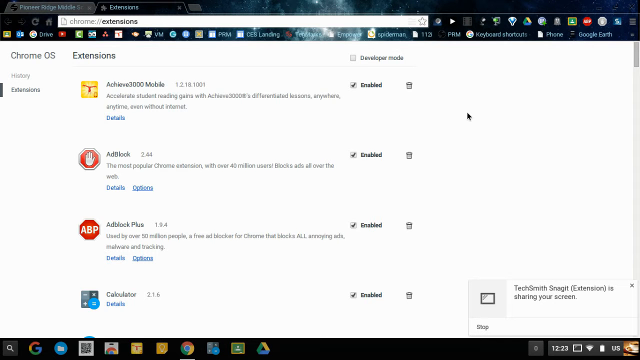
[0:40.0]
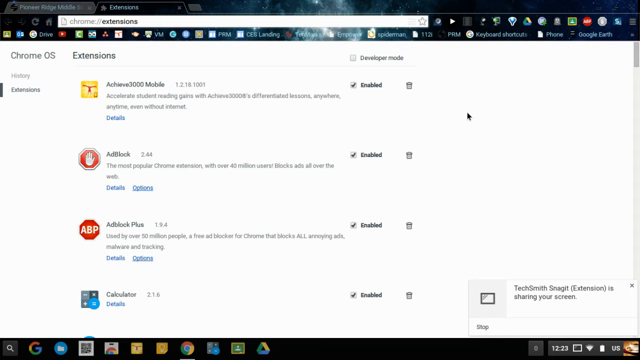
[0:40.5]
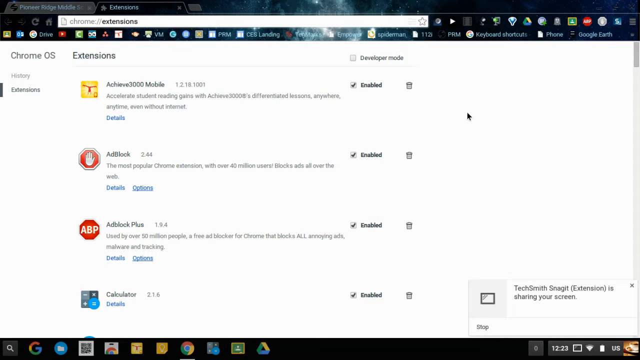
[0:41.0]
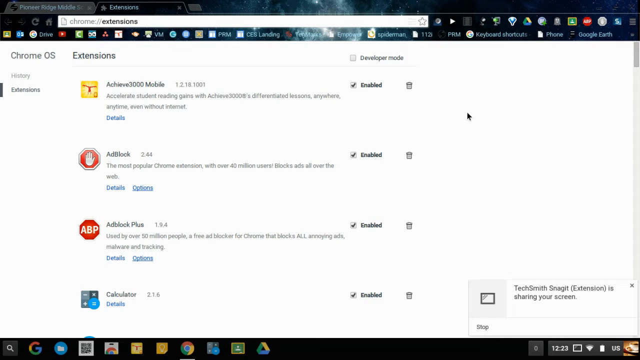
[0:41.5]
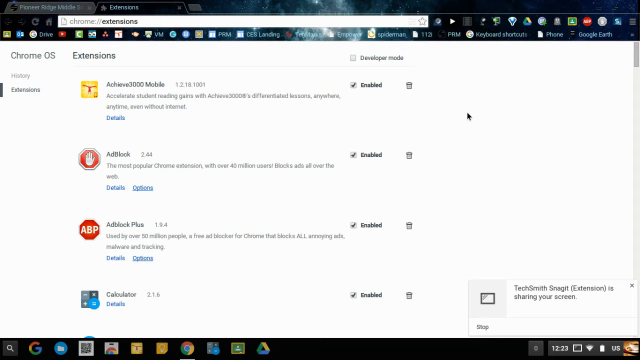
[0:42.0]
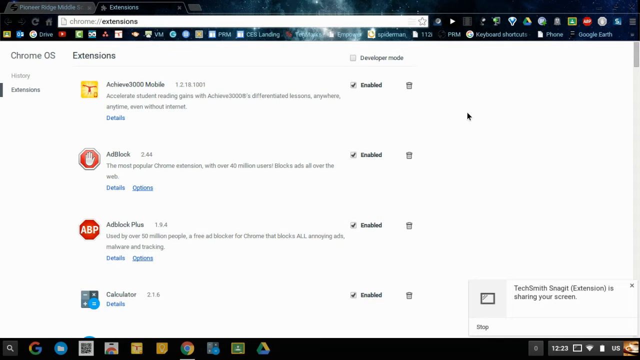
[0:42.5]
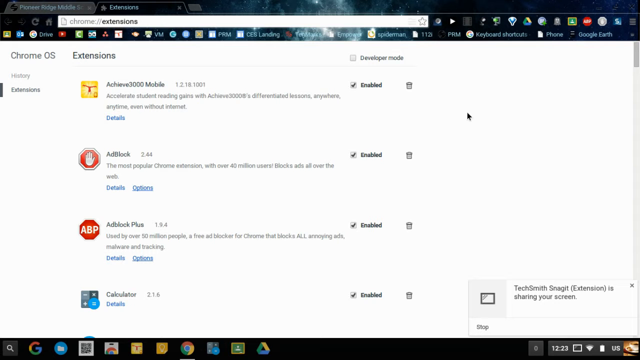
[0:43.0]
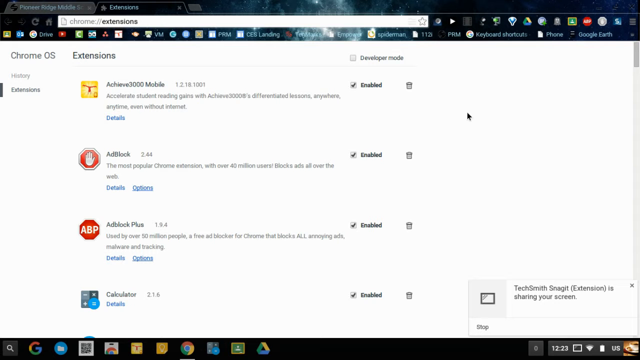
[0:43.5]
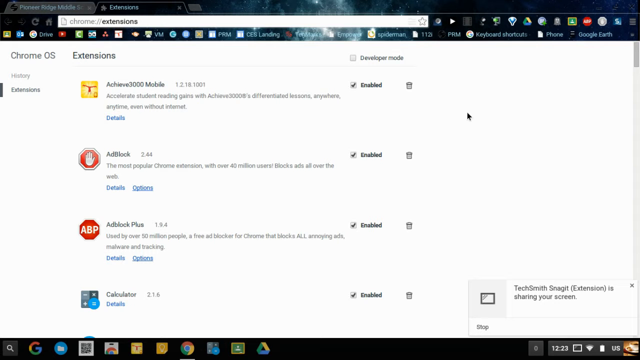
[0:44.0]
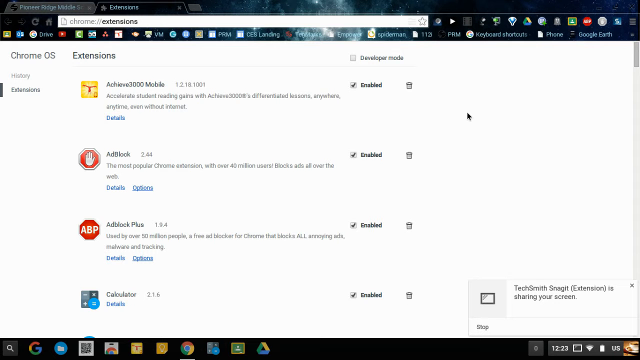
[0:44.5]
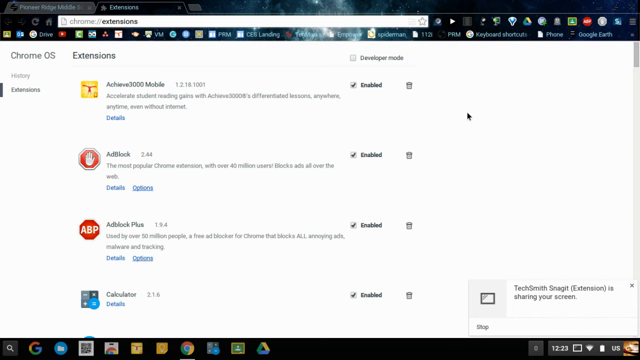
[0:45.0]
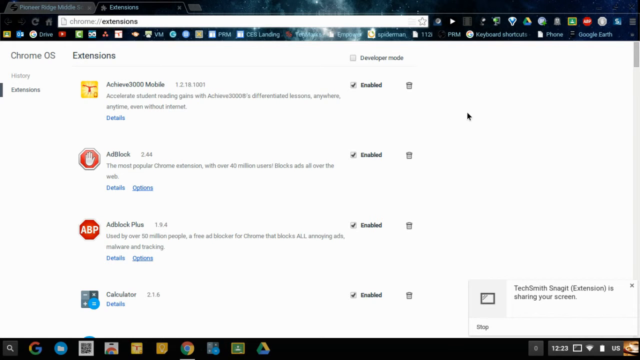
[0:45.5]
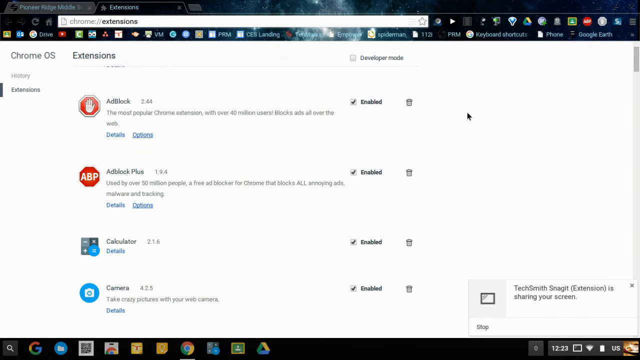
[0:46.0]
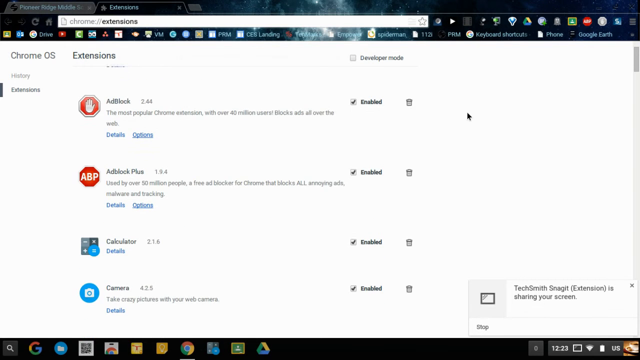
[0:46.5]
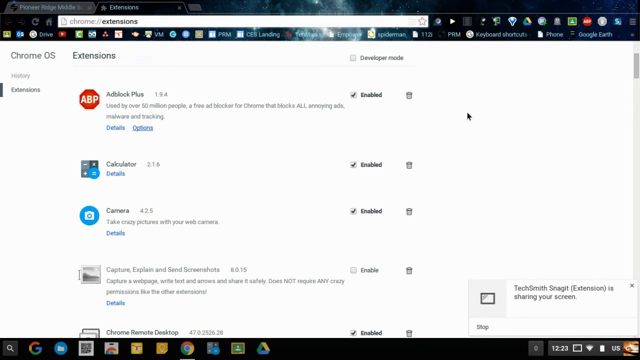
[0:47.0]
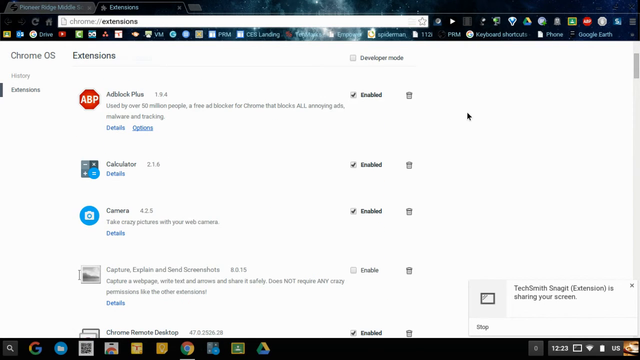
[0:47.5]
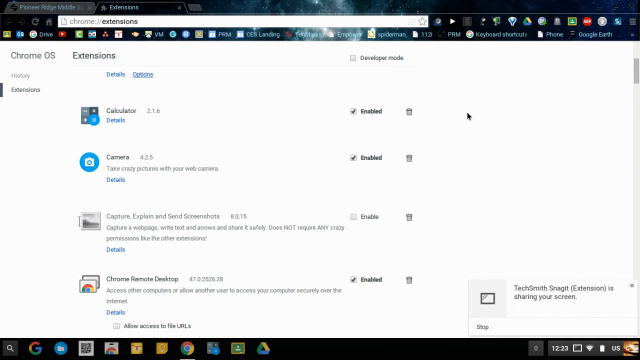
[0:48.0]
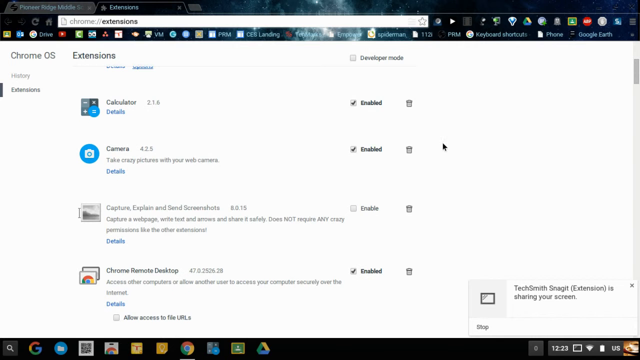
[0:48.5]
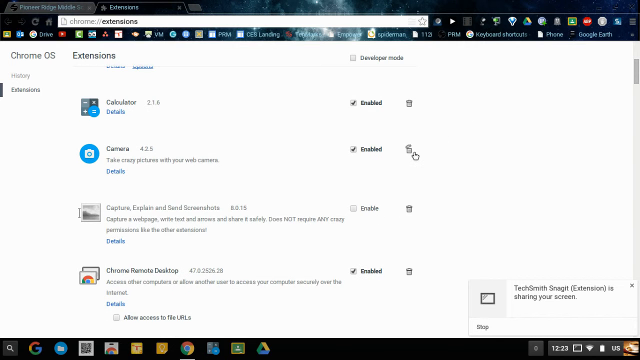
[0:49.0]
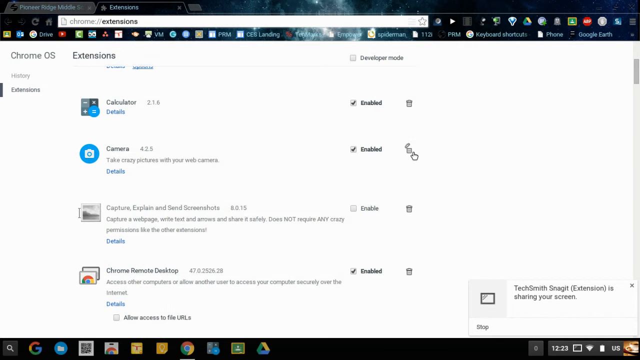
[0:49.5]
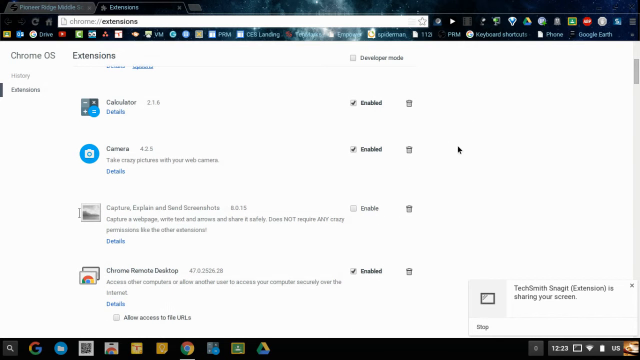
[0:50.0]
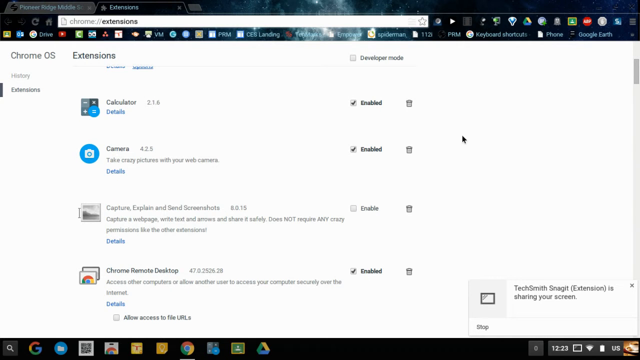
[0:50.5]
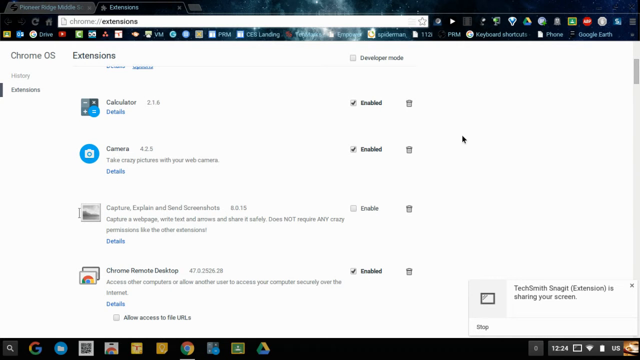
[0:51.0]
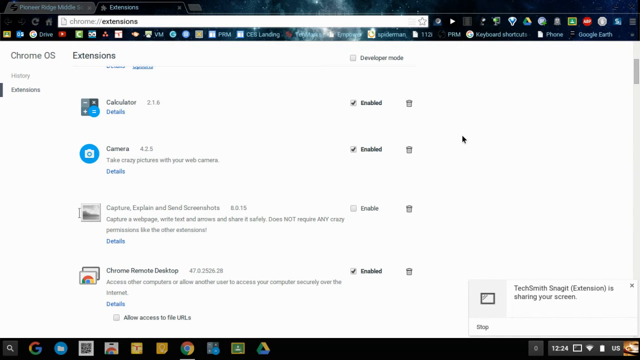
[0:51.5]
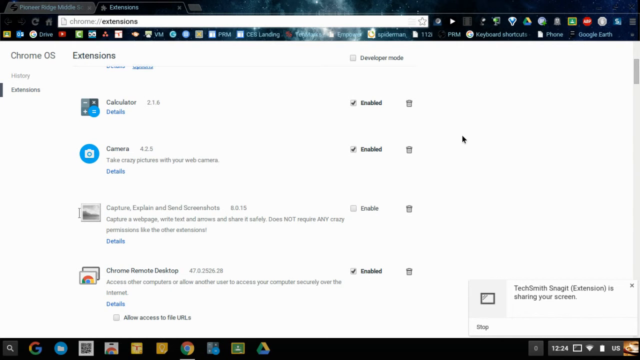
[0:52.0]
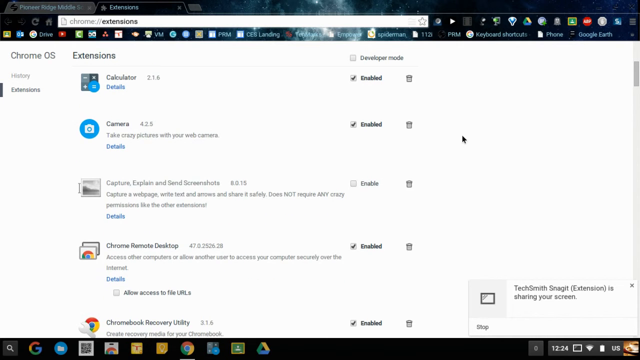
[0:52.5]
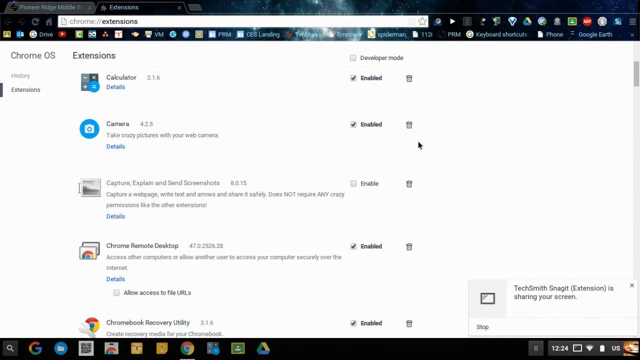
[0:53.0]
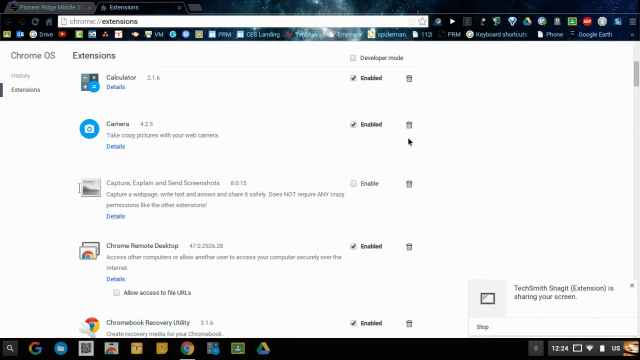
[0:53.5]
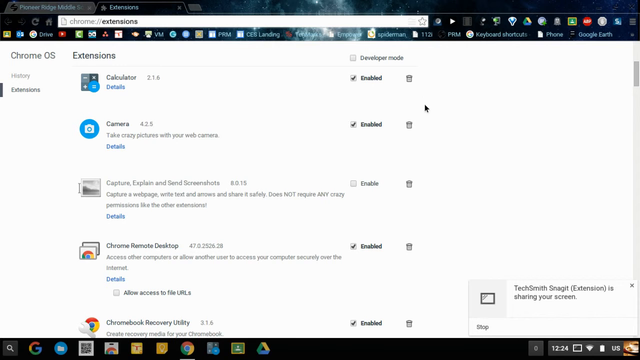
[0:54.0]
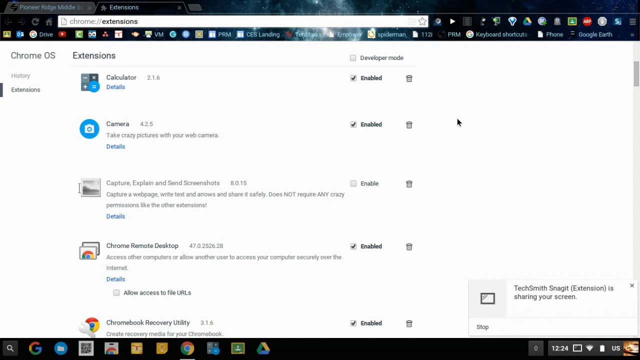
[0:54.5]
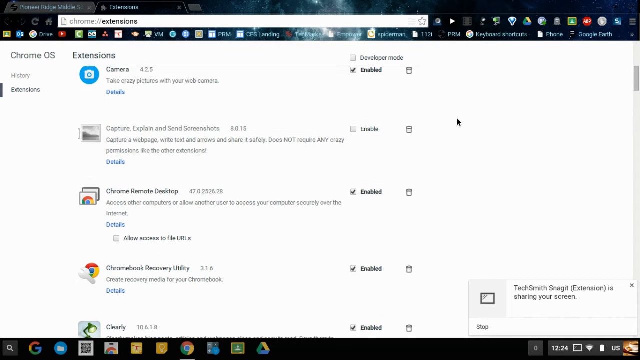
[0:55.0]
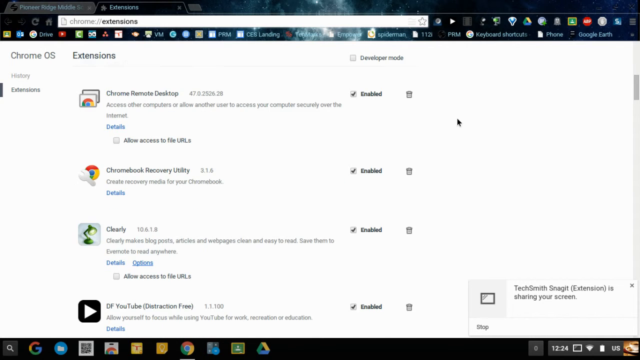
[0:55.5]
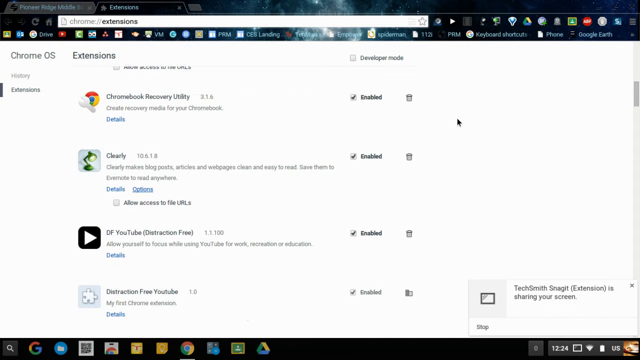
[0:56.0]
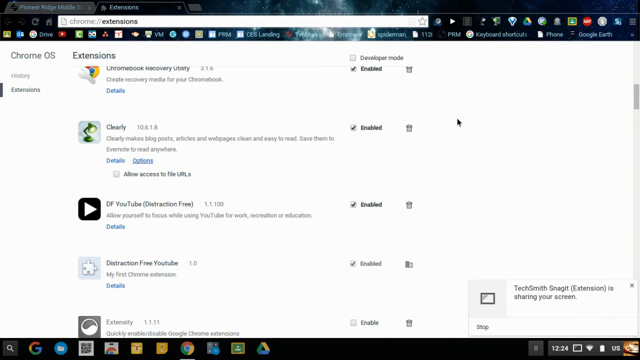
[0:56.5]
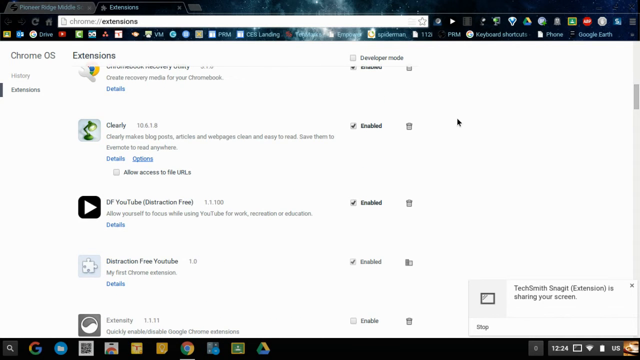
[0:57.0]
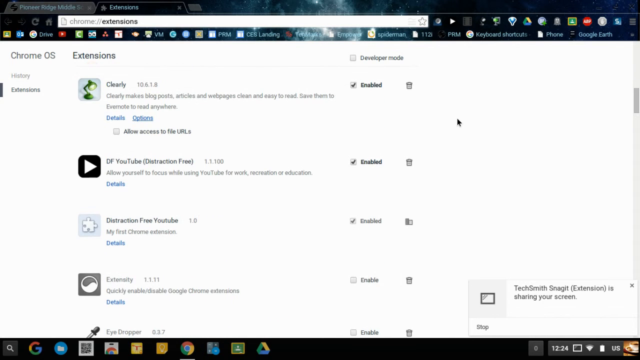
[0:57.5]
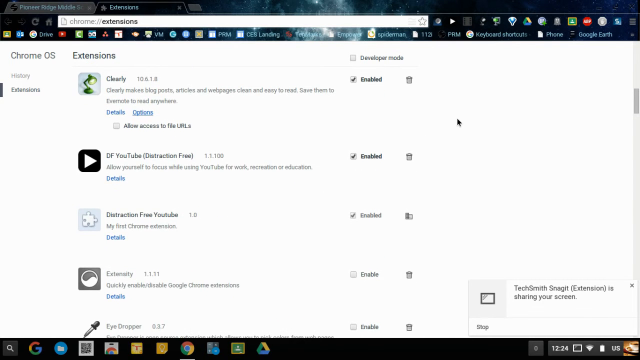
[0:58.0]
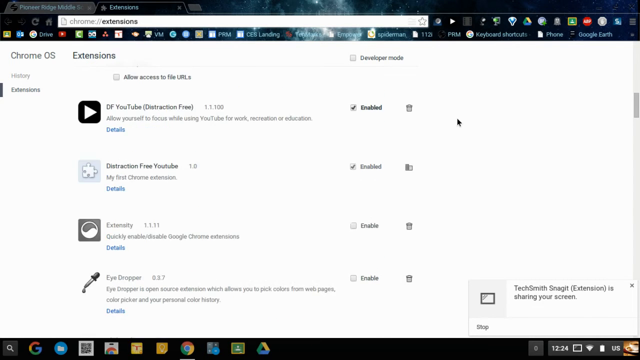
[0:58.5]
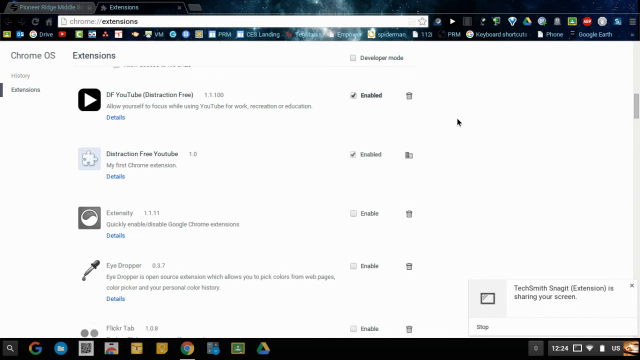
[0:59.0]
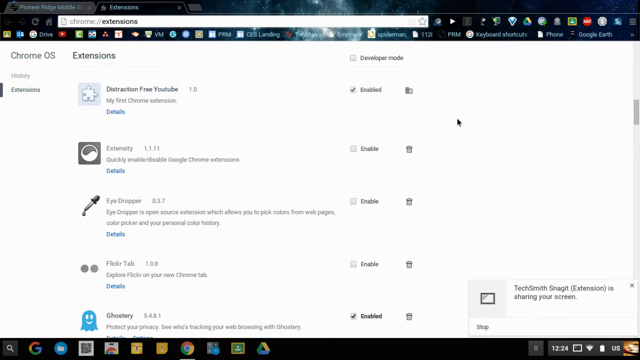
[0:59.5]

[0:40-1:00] Someone scrolls through a Chrome extensions page with a plain white background. The list starts with Achieve 3000 Mobile, AdBlock, AdBlock Plus, and Calculator, and as they scroll it shows Camera, Capture Explained Screenshots, Chrome Remote Desktop, Chromebook Recovery Utility, Clearly, and DF YouTube (Distraction Free YouTube), where the view cuts off. Apparently basically all of the extensions are enabled. Some are grayed out, such as Camera, Capture, and Chrome Remote Desktop. Chrome Remote Desktop also has "allow access to file URLs." The list also includes Ghostlery, Eyedropper, and Extensity.